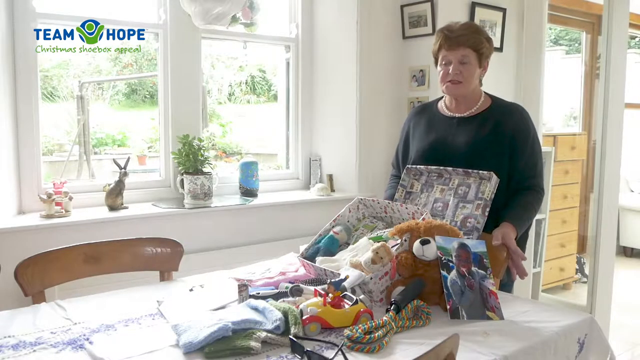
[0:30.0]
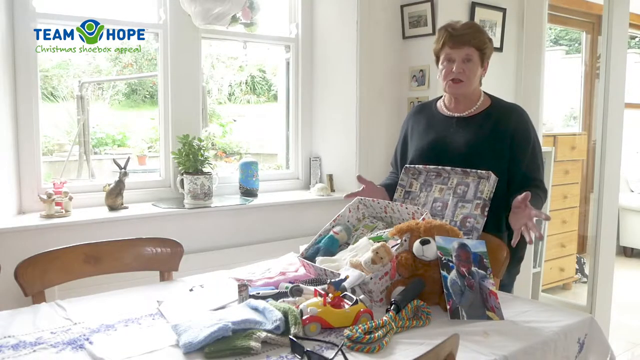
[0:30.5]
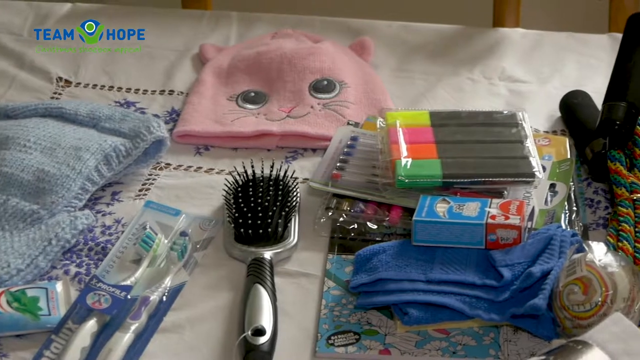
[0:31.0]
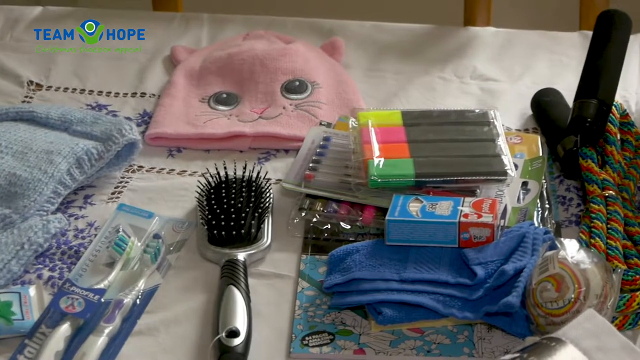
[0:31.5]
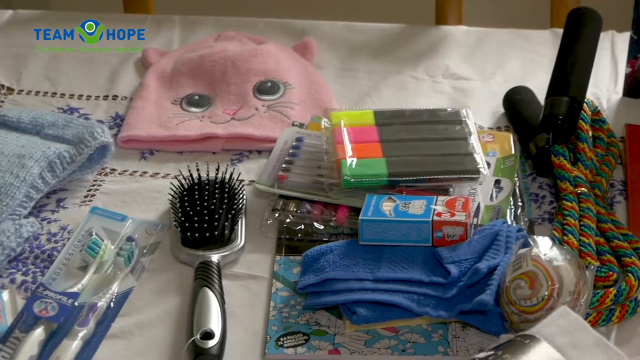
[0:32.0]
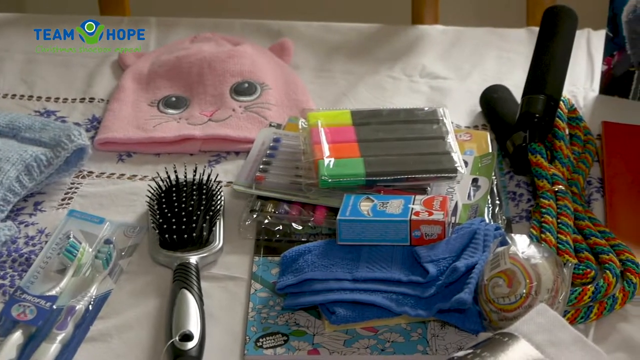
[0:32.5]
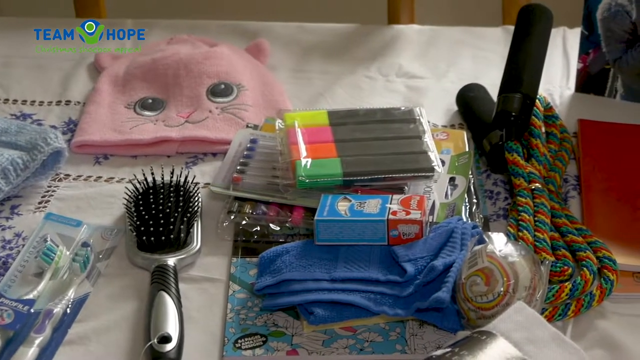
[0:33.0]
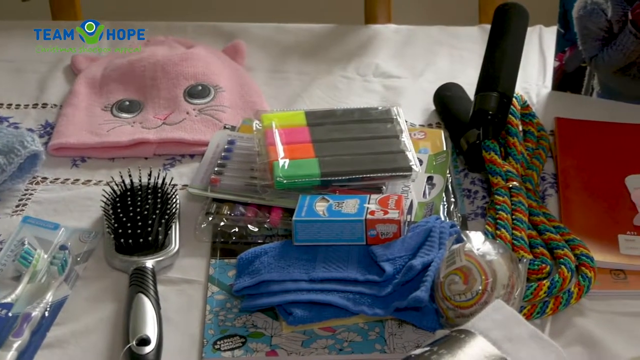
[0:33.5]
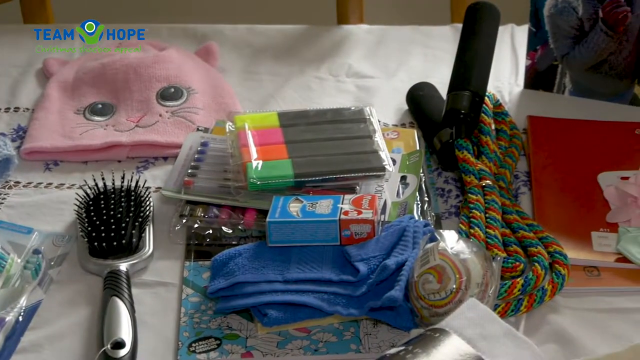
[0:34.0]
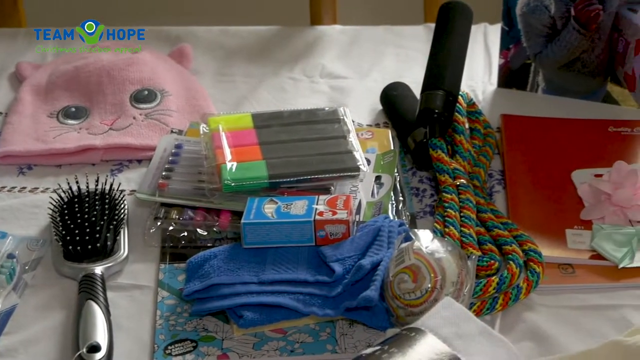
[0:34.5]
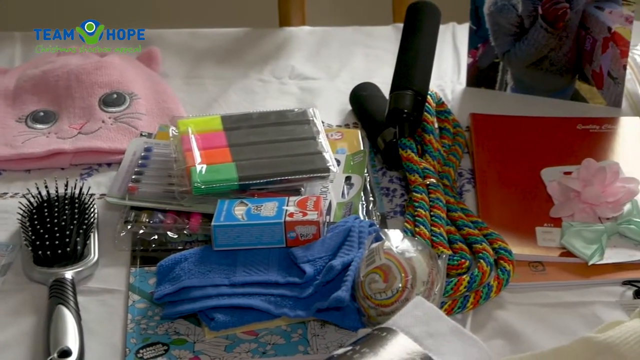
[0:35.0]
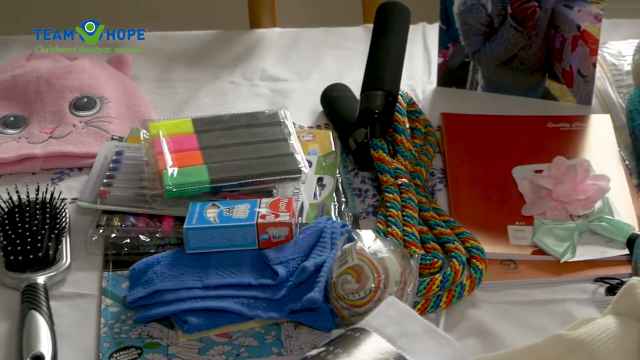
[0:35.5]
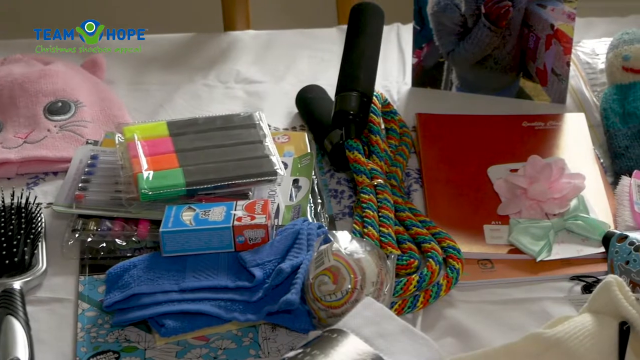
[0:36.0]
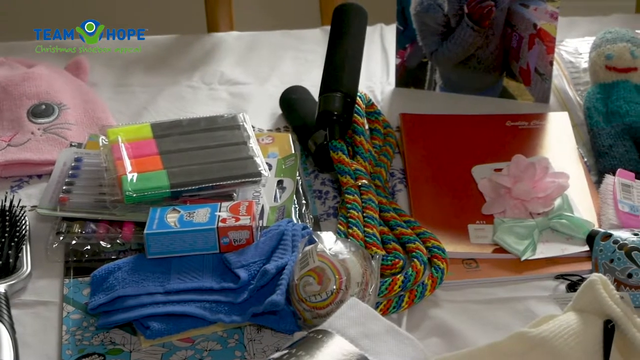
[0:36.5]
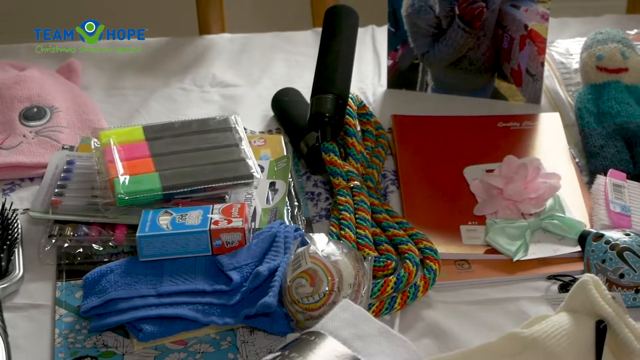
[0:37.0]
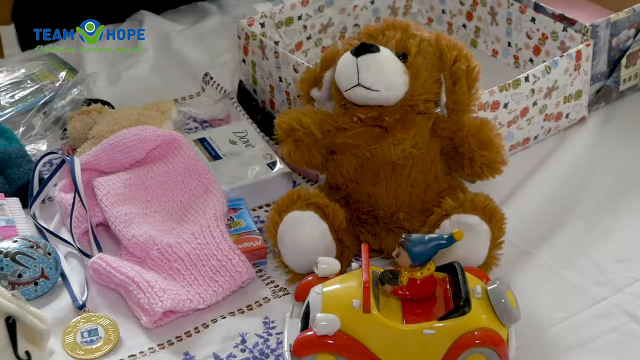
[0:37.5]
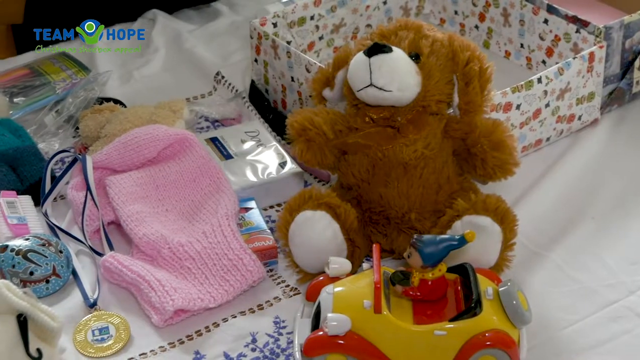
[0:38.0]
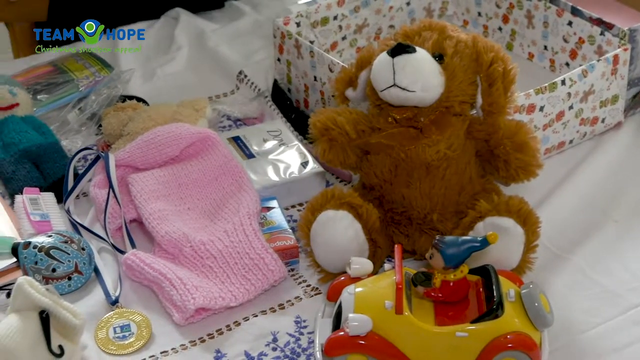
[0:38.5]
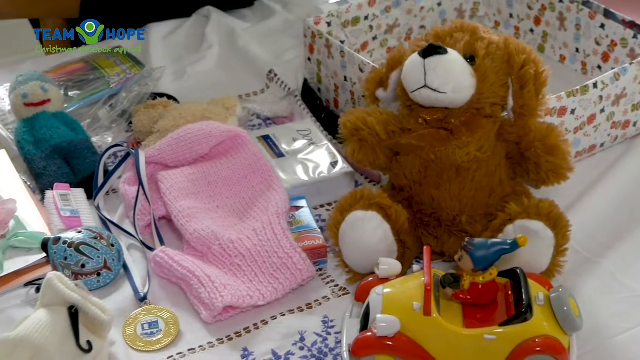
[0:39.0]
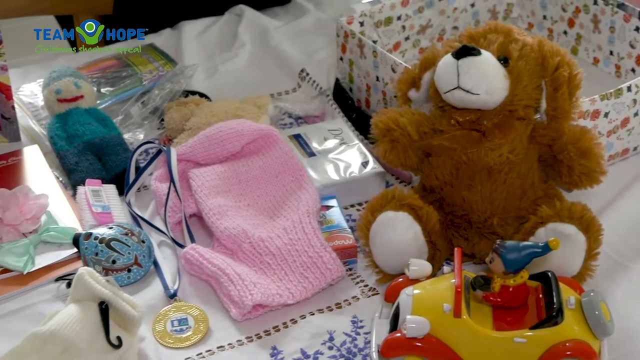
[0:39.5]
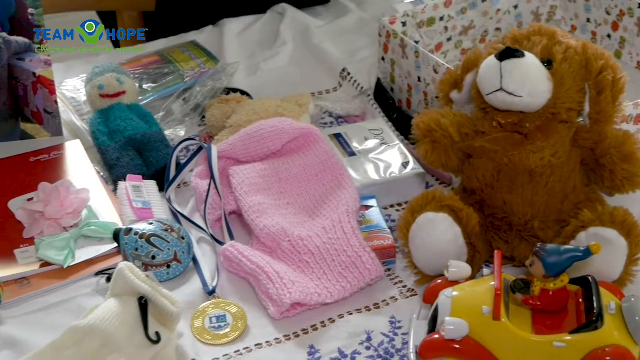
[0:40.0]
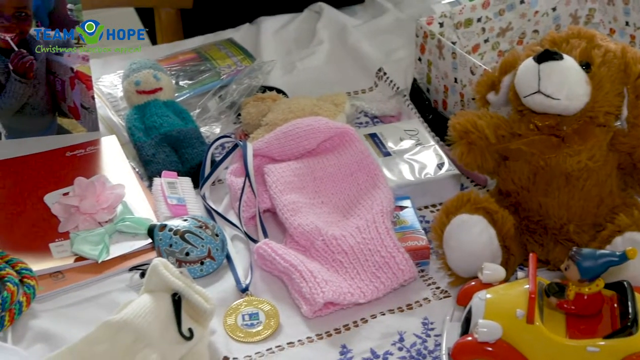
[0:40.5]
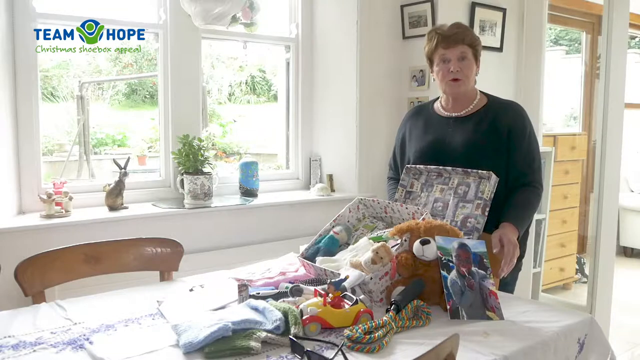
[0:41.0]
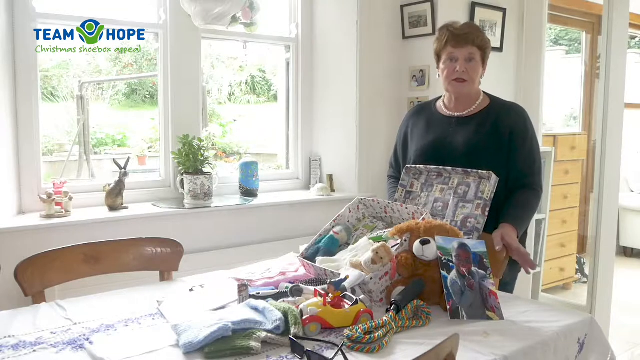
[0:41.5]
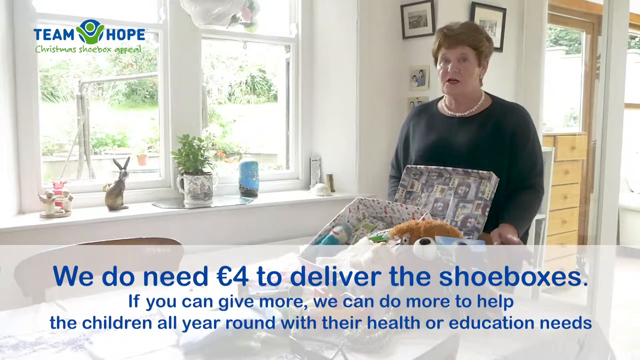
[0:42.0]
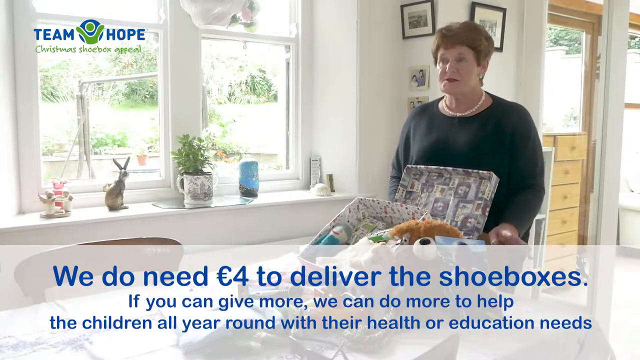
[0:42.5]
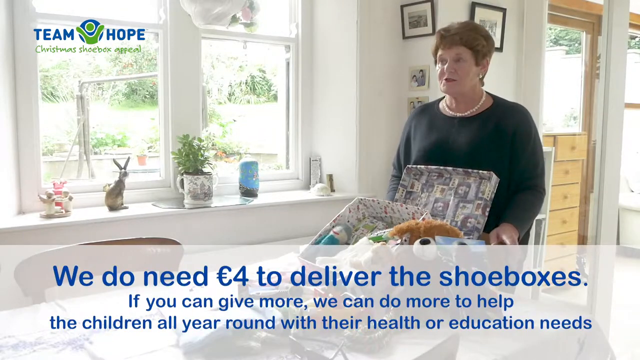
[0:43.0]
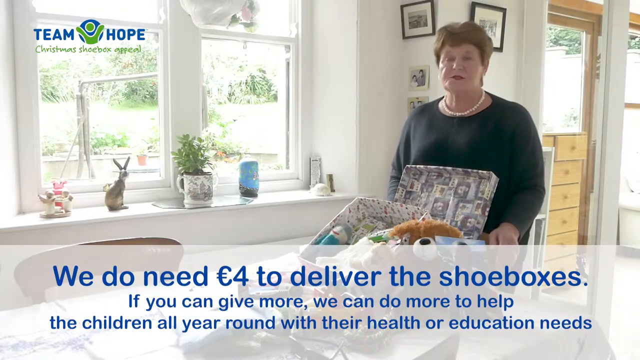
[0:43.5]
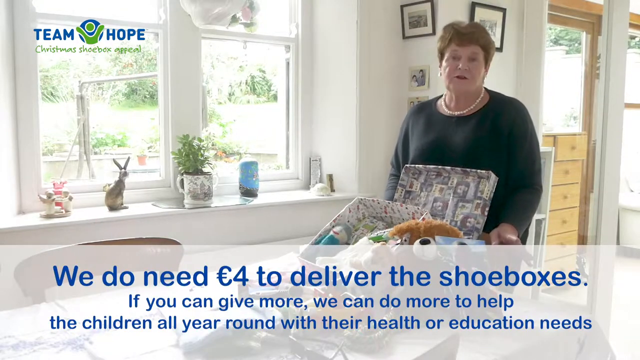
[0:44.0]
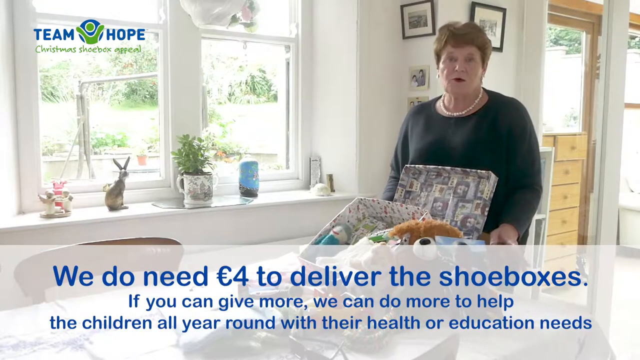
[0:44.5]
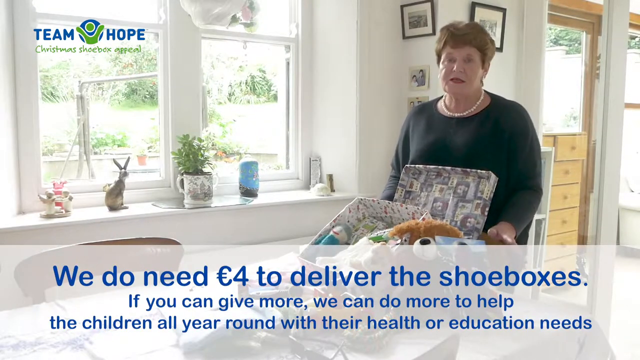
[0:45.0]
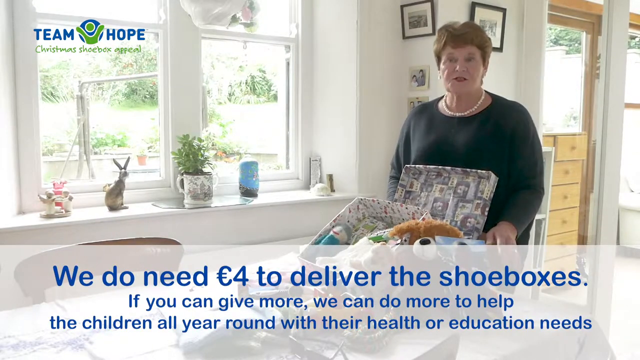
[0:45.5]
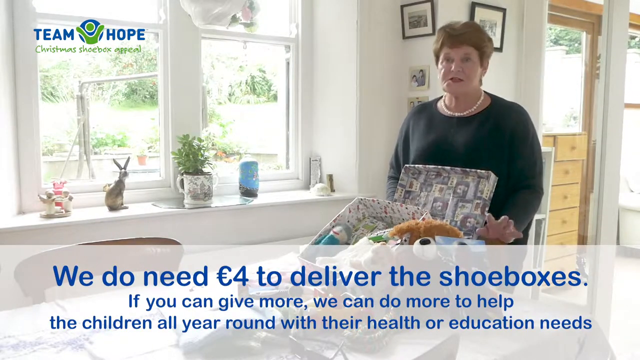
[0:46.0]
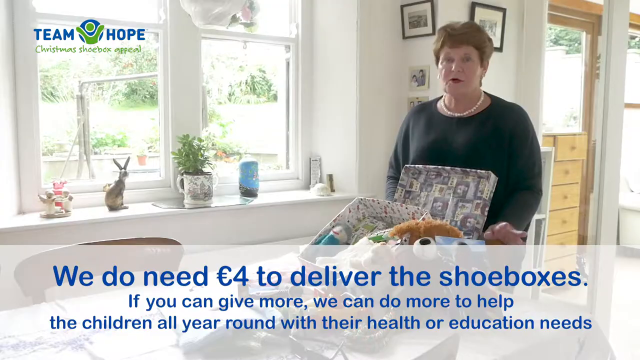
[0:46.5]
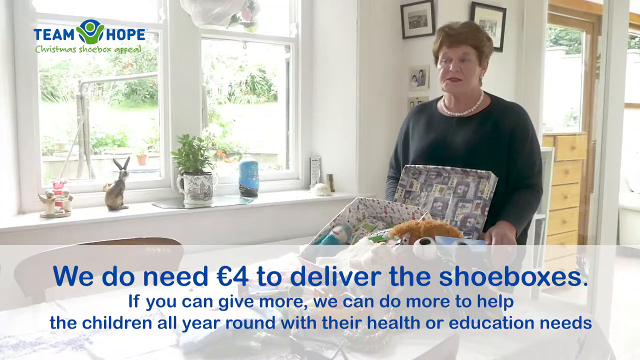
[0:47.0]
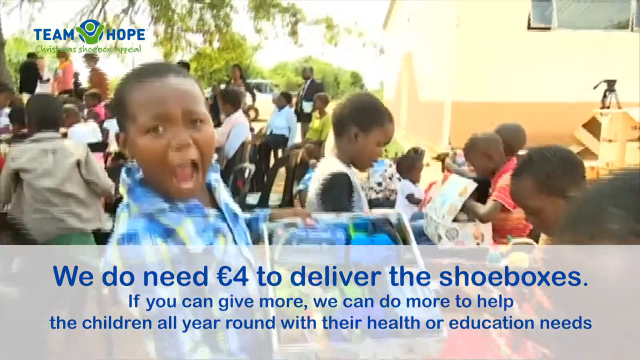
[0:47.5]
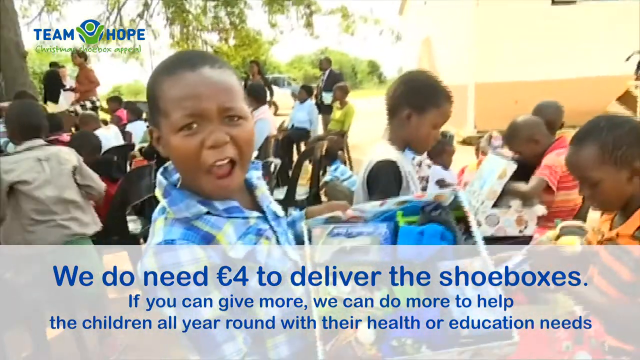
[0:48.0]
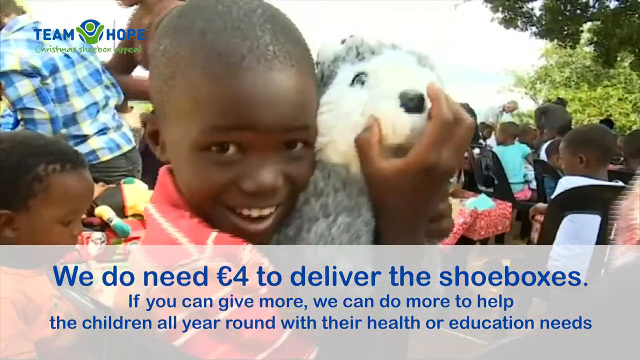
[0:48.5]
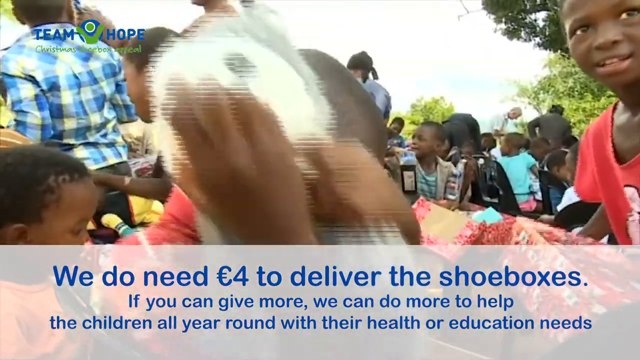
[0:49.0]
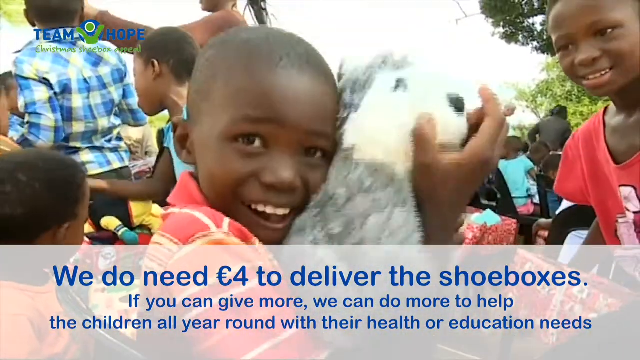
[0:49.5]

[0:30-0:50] The camera looks down at items on a table that would go into one of the Christmas shoeboxes: a little beanie with a cat face on it, a small brush, two toothbrushes, some highlighters, some pens, what looks to be toothpaste, a washcloth, and a little sweater. The camera pans around the table to show a jump rope, some books, and some hair ties, then another set of items with teddy bears, baby toys, and clothing. A banner pops up at the bottom reading "we do need four British pounds to deliver shoeboxes. If you can give more, we can do more to help the children all year round with their health or education needs."